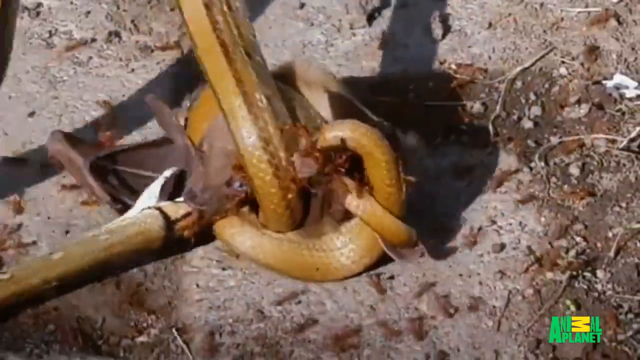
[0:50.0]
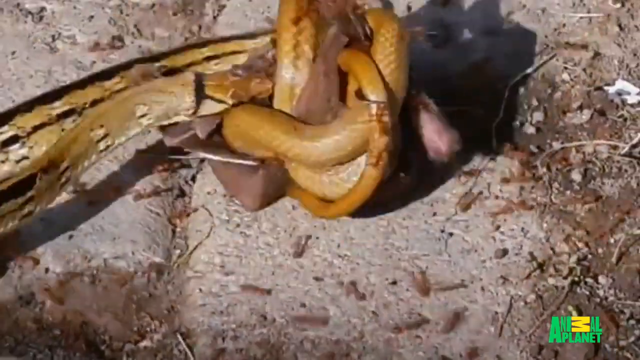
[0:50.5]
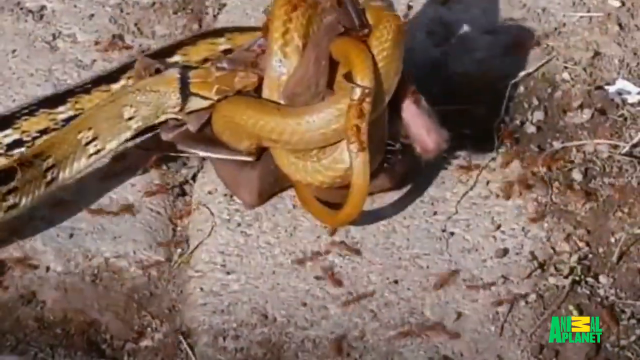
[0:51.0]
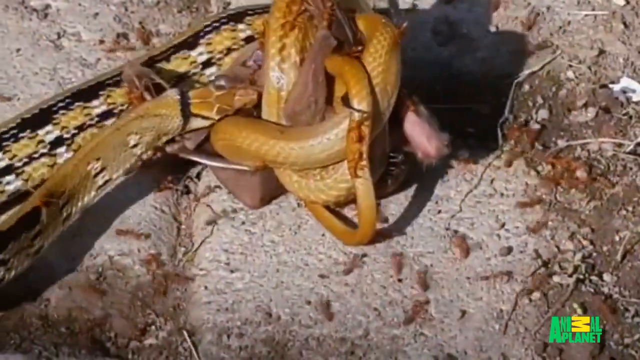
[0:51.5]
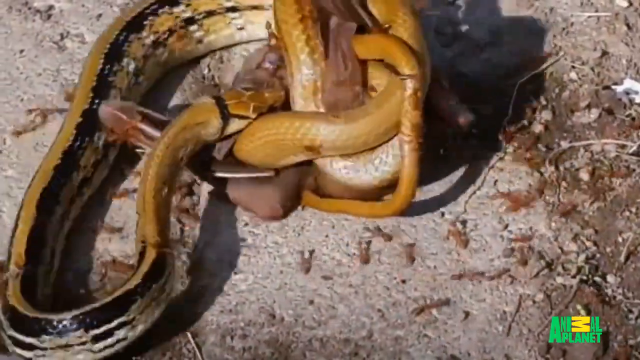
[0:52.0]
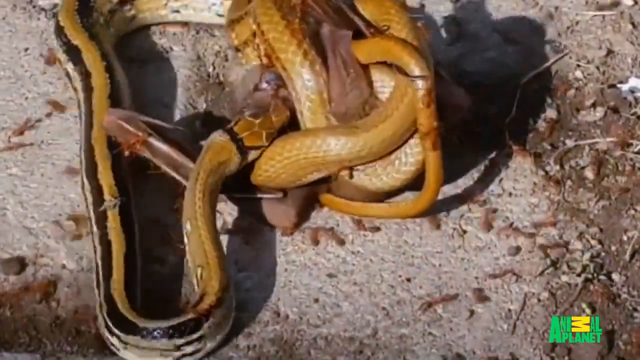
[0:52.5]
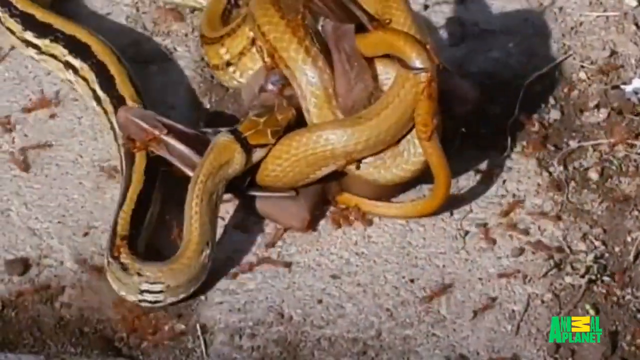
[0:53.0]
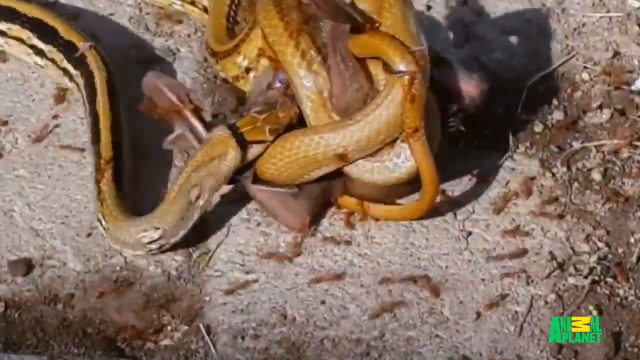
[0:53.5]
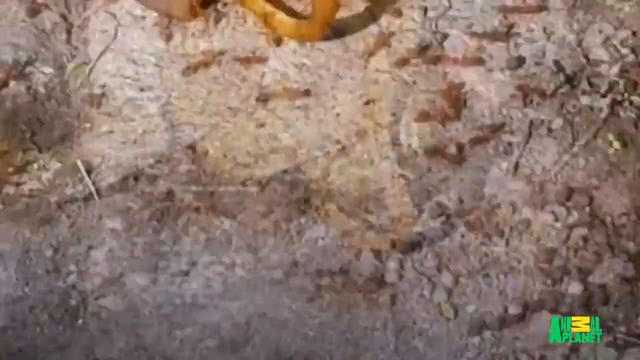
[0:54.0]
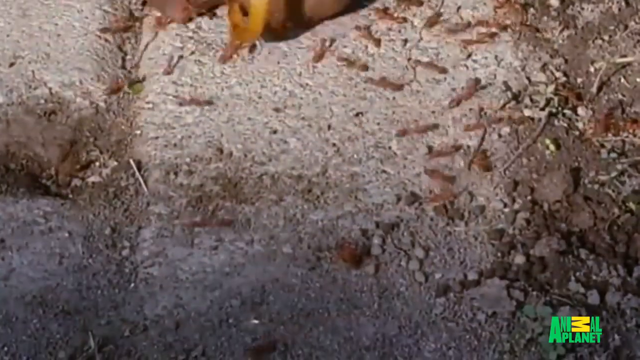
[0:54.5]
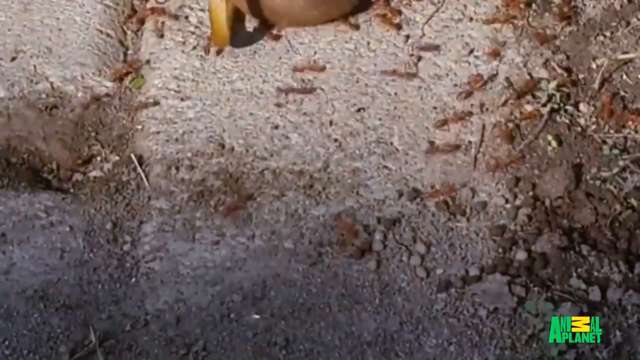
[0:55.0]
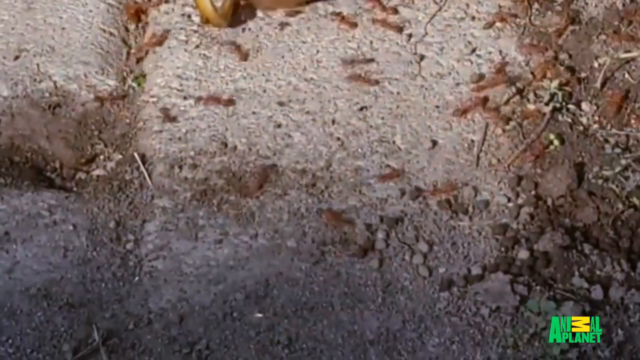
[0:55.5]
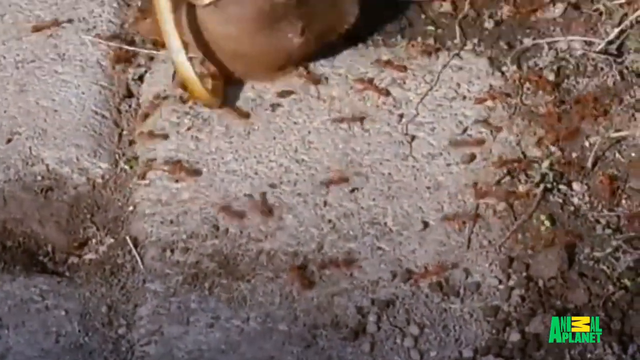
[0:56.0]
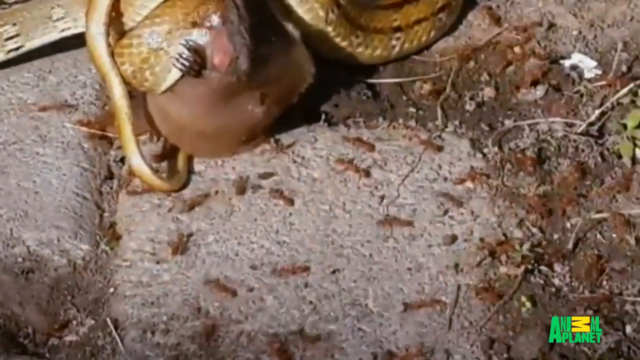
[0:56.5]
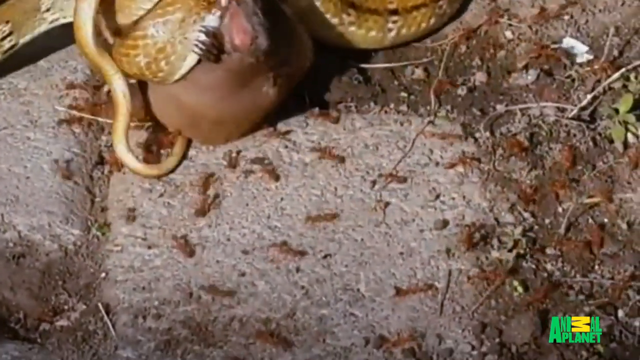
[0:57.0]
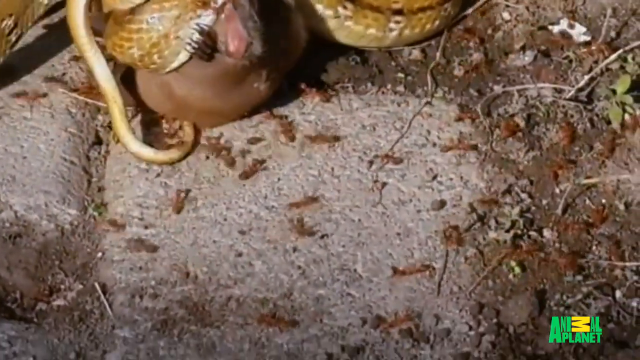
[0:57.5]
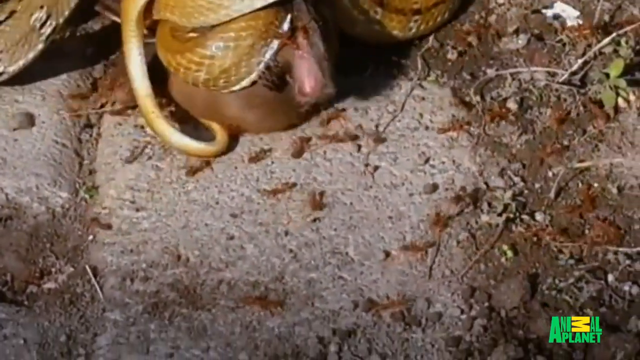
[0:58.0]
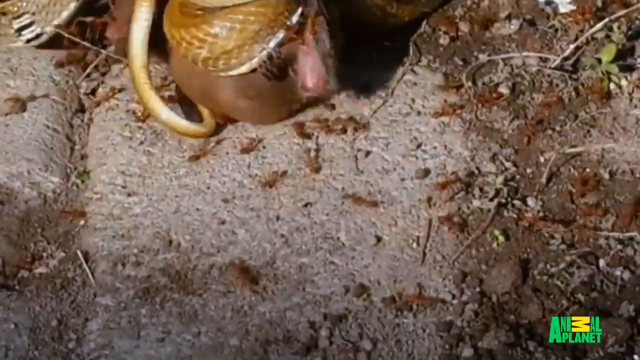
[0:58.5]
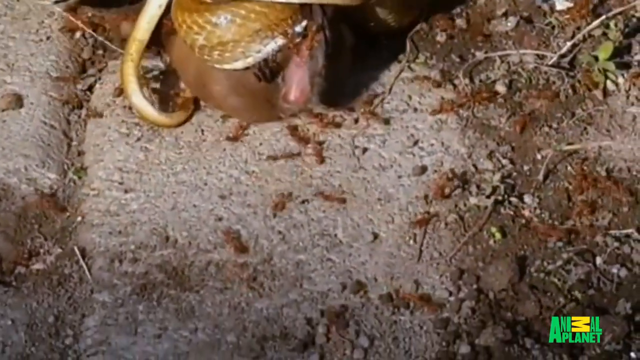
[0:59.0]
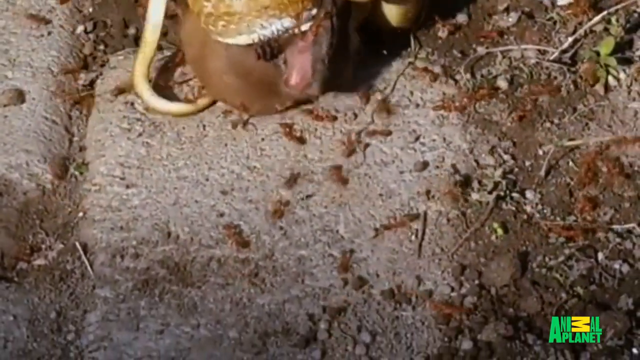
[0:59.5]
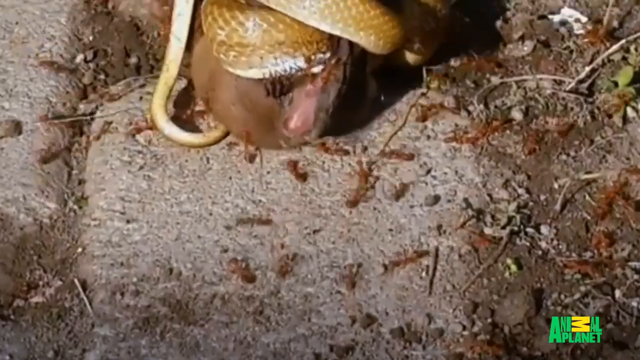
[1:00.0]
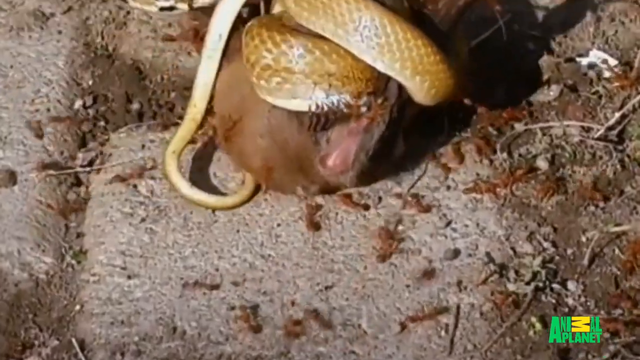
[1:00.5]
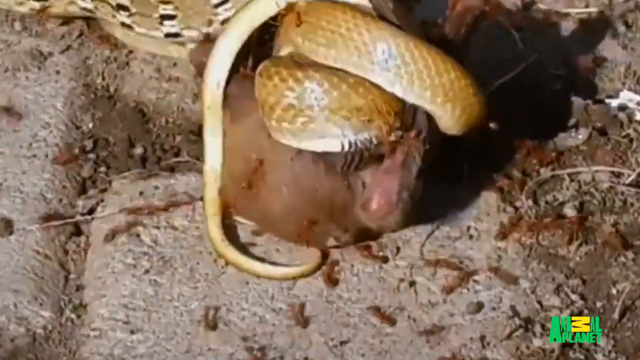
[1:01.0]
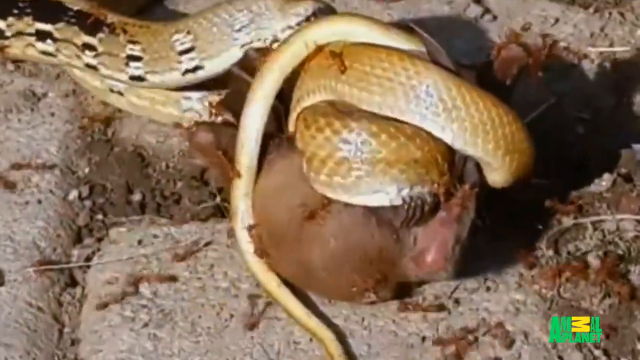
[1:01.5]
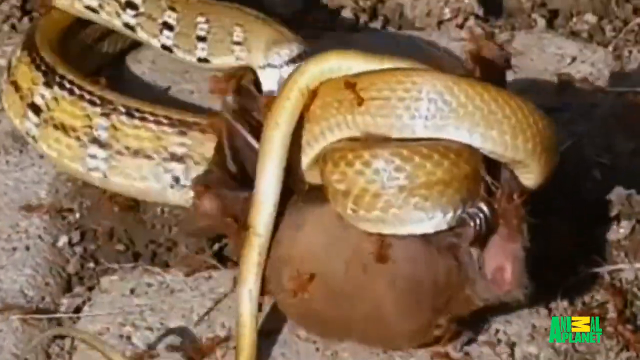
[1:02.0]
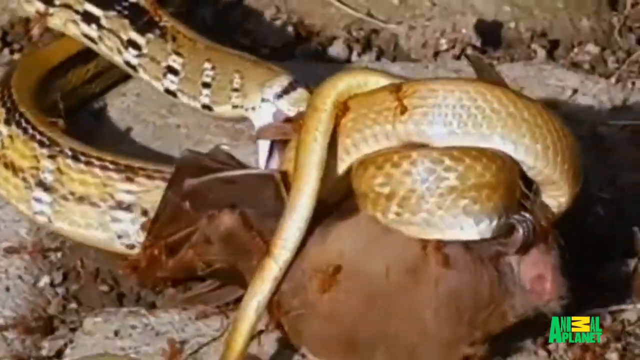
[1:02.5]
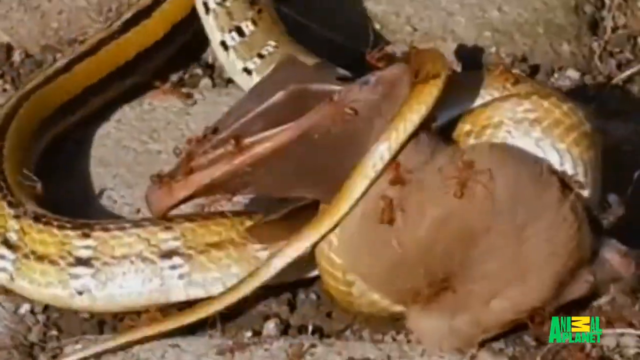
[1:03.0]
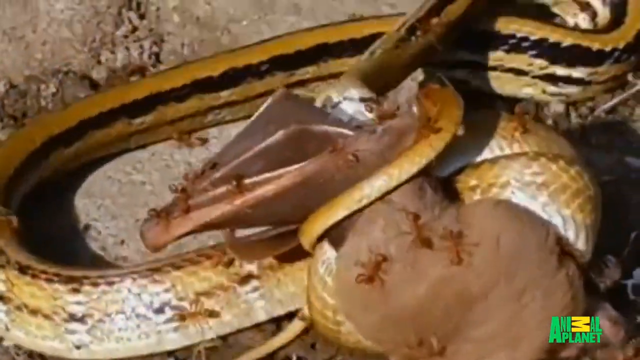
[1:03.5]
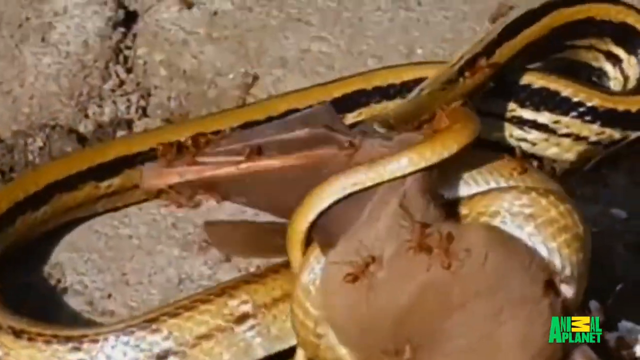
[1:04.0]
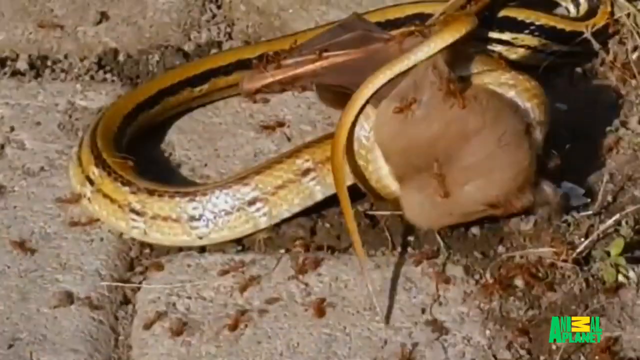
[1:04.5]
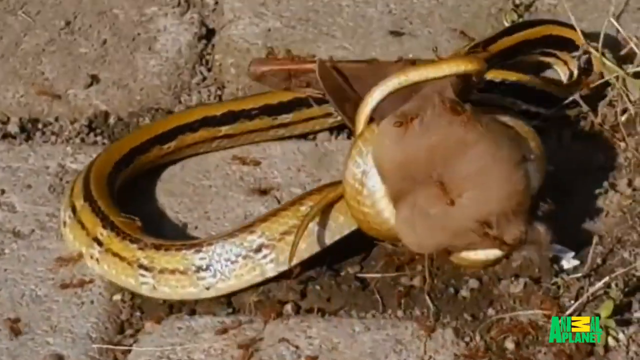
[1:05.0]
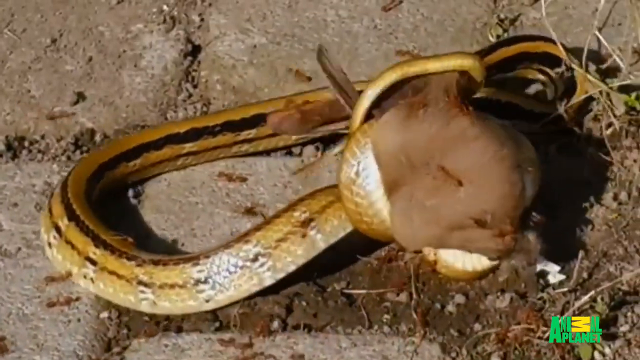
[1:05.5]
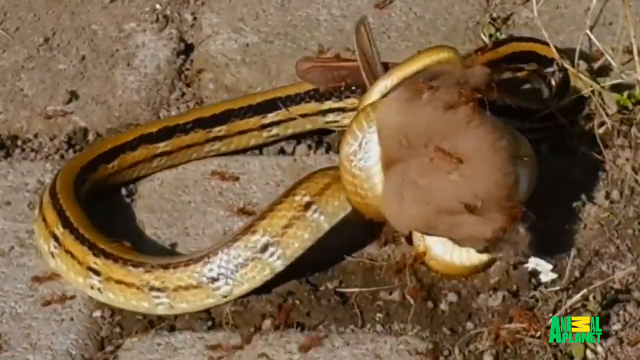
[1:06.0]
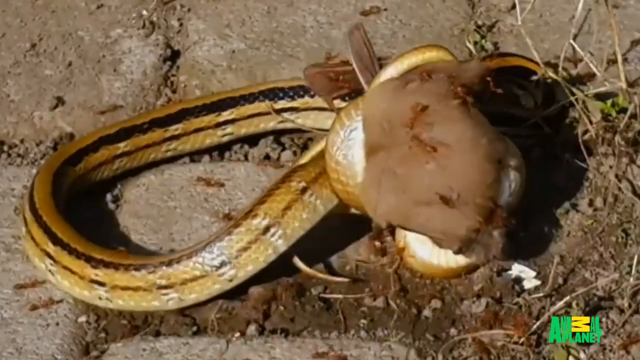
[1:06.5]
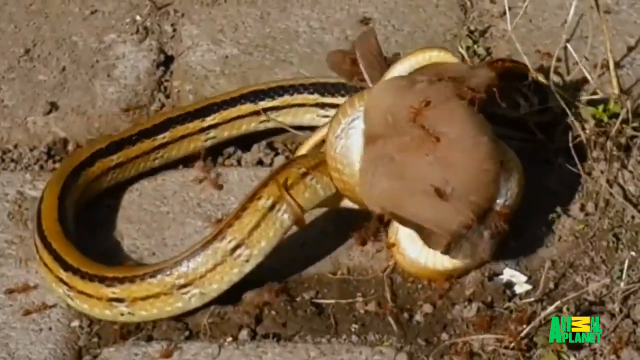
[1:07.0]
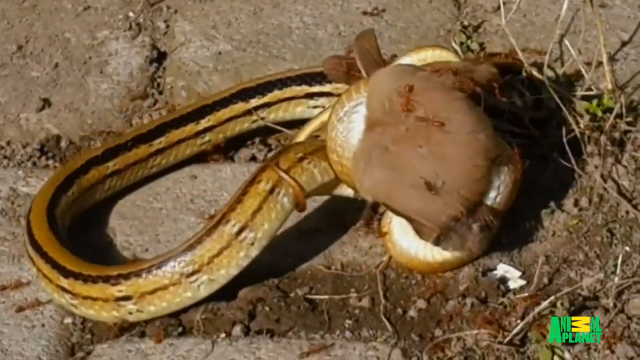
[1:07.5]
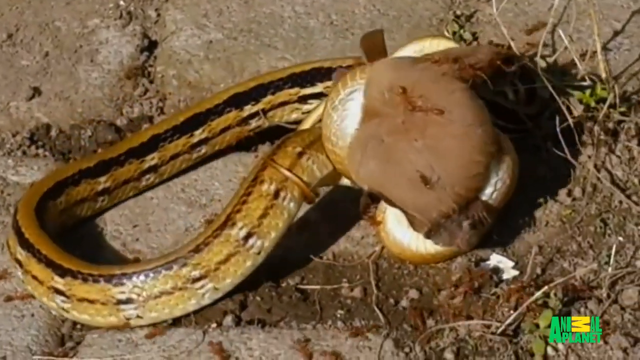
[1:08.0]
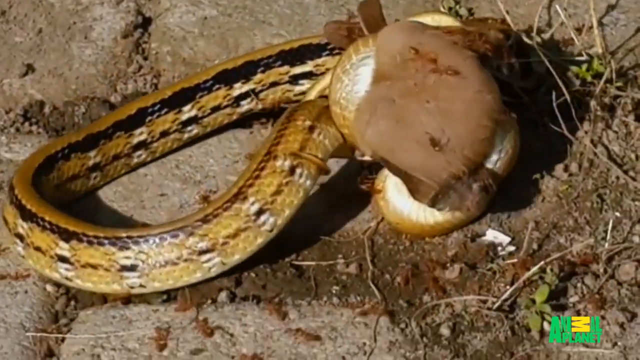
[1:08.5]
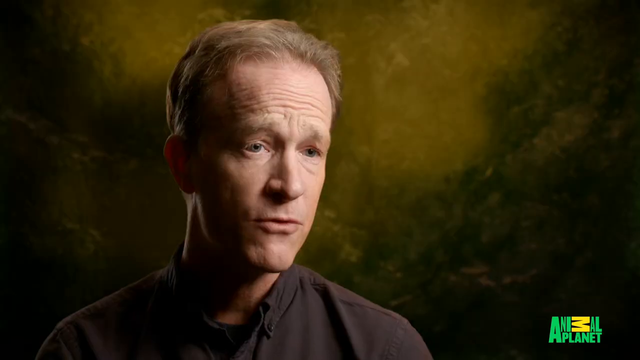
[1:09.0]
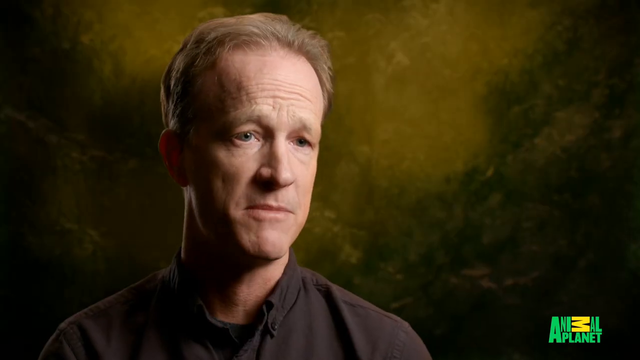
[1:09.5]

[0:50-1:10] A snake is trying to ambush a bat while a ton of brown and red ants attack the bat. The snake is a yellow tan color with black stripes and maybe some black dots on its body, and it is wrapped up around the bat, trying to strangle it. The video keeps switching back and forth between this and a man who is doing commentary over the video; he is middle-aged with thinning sandy blonde hair. An Animal Planet logo is in the bottom right corner.